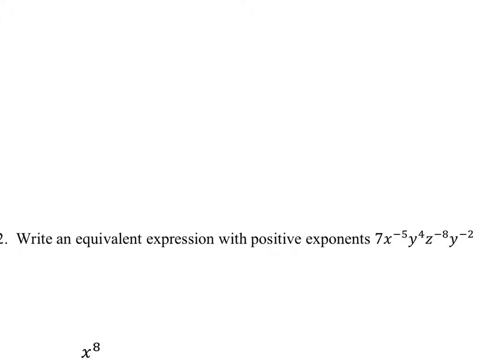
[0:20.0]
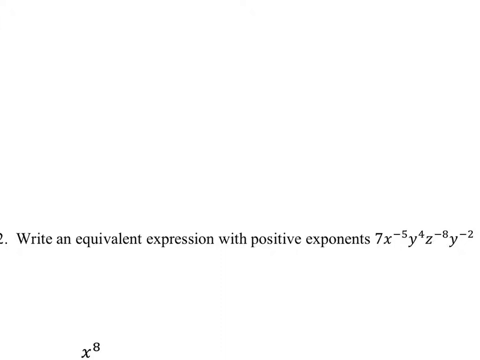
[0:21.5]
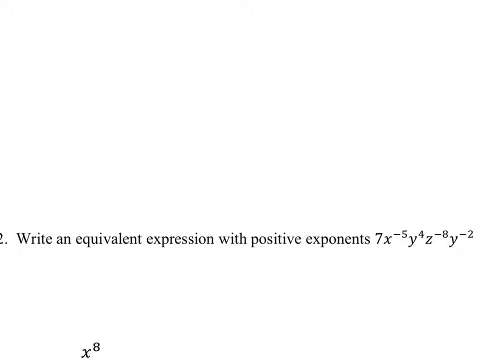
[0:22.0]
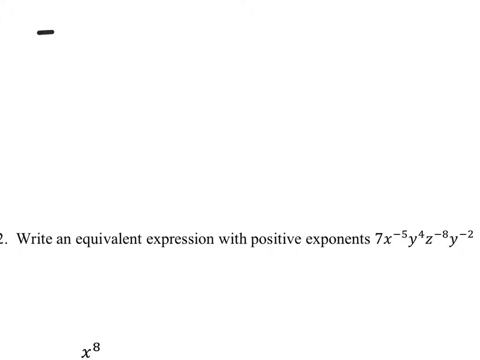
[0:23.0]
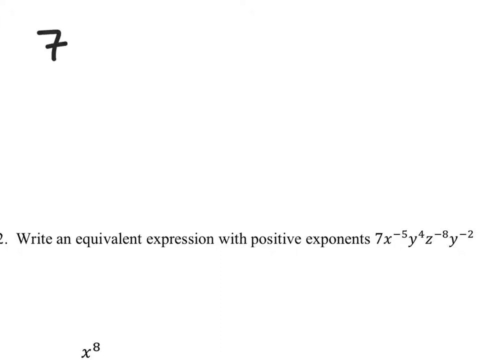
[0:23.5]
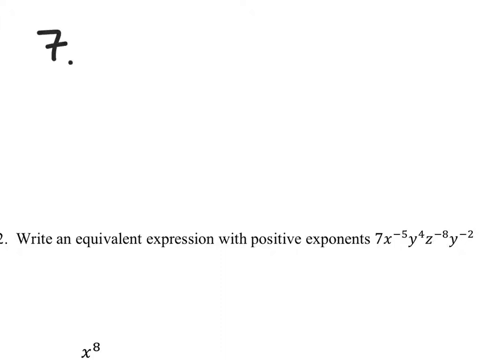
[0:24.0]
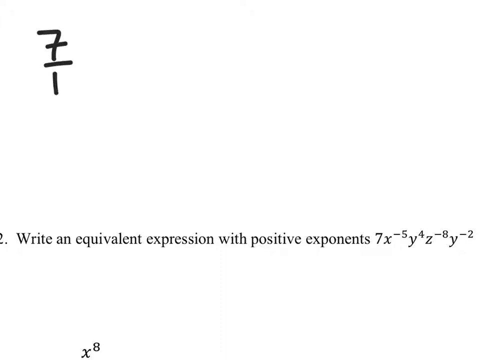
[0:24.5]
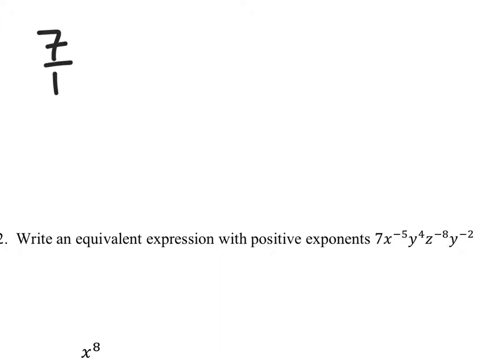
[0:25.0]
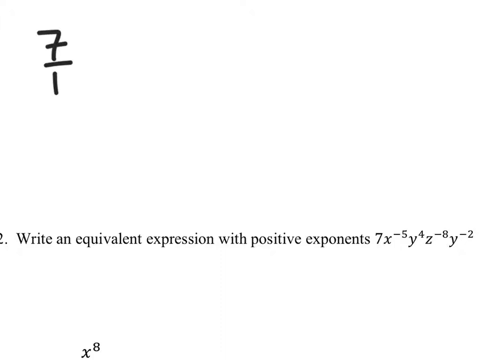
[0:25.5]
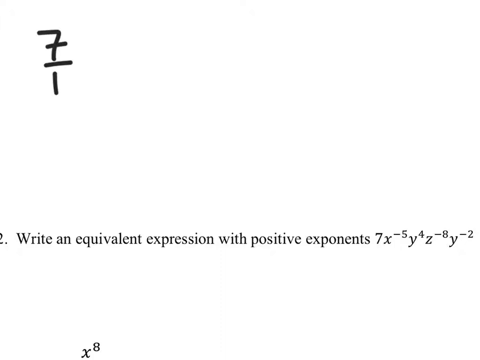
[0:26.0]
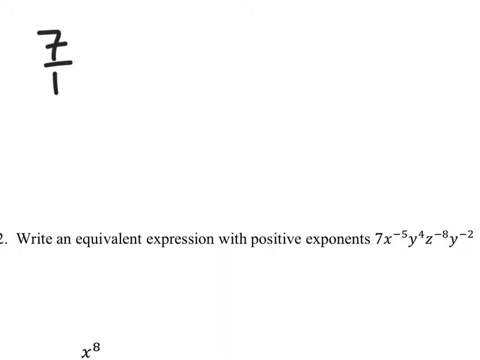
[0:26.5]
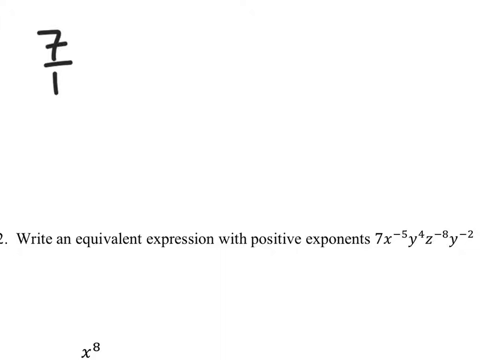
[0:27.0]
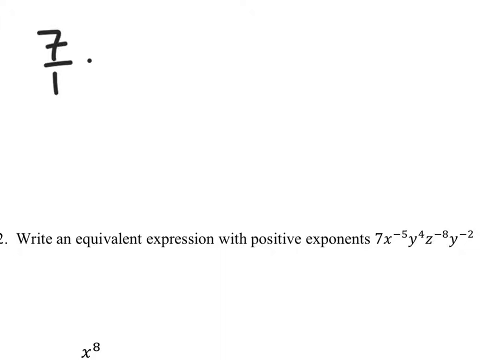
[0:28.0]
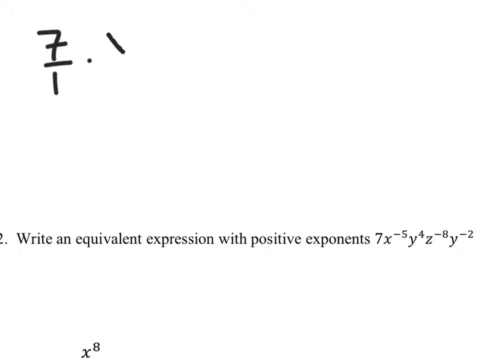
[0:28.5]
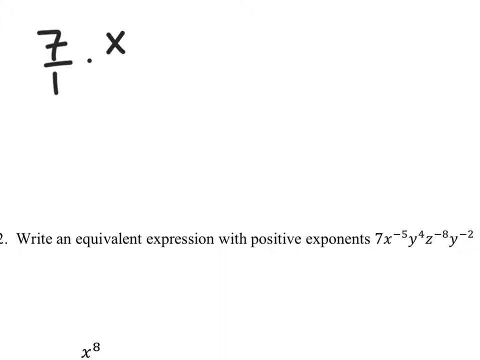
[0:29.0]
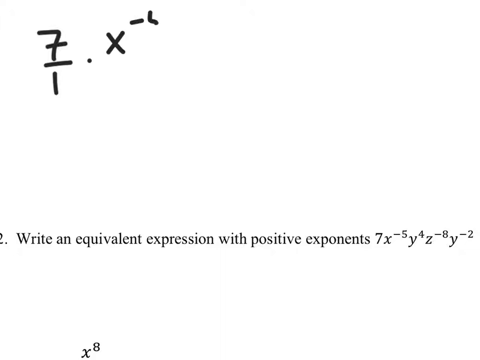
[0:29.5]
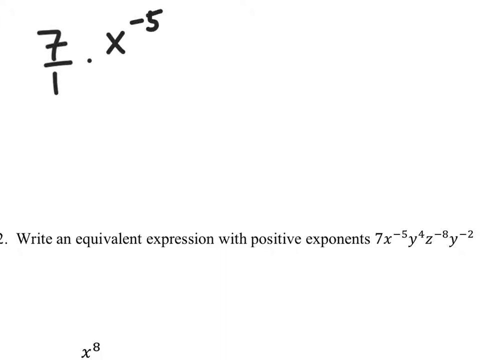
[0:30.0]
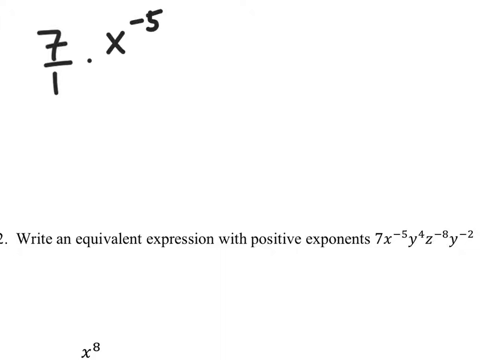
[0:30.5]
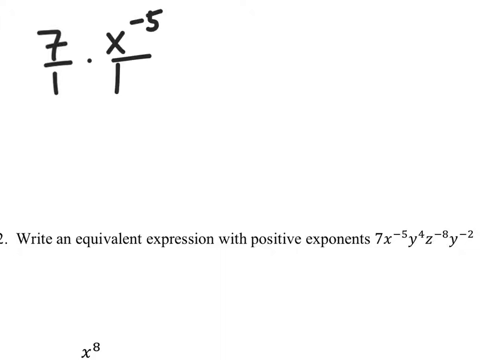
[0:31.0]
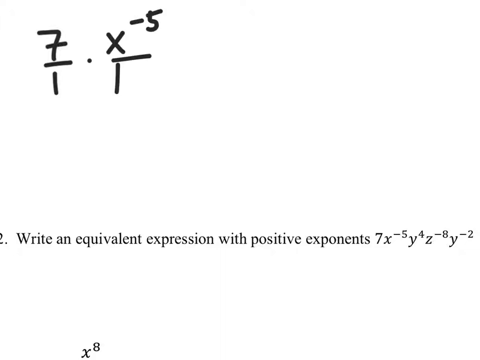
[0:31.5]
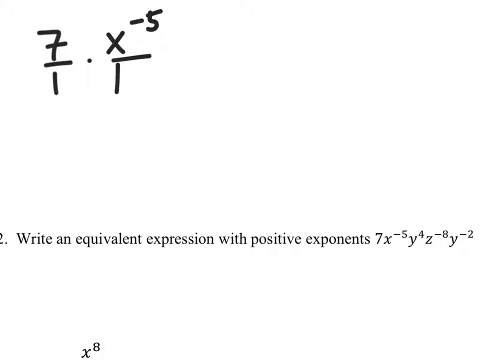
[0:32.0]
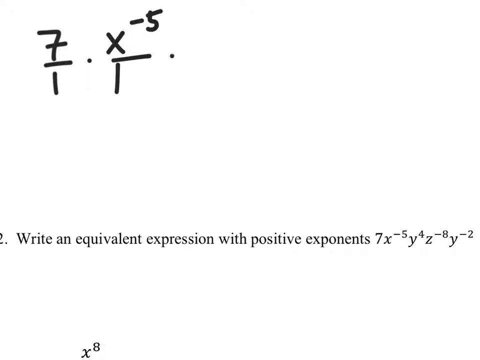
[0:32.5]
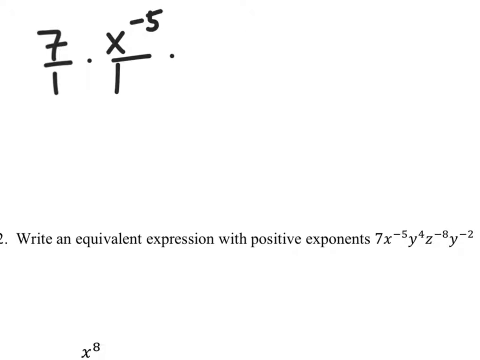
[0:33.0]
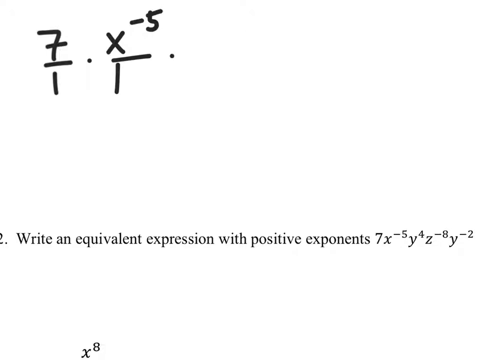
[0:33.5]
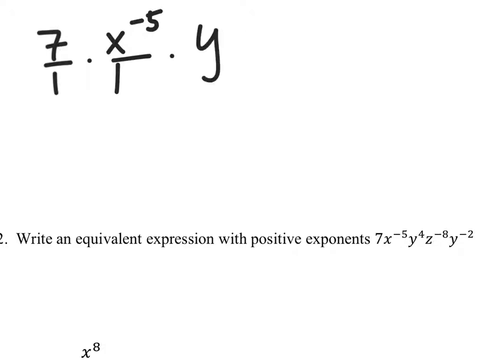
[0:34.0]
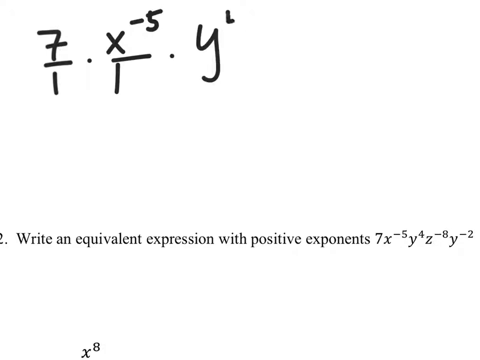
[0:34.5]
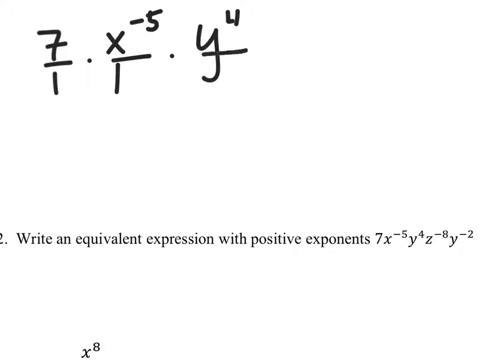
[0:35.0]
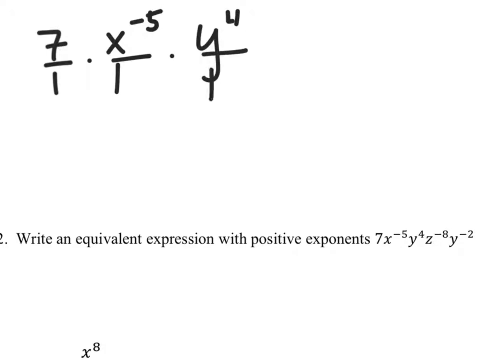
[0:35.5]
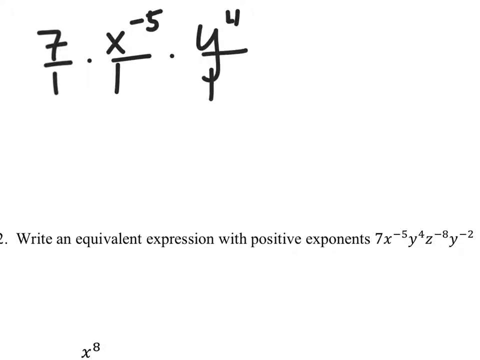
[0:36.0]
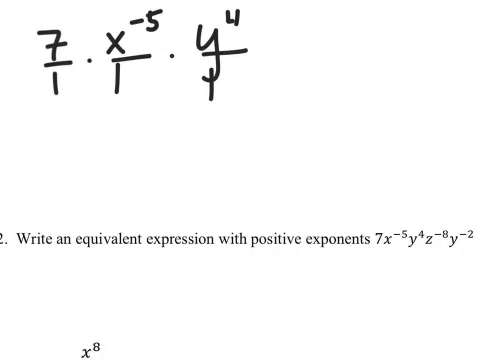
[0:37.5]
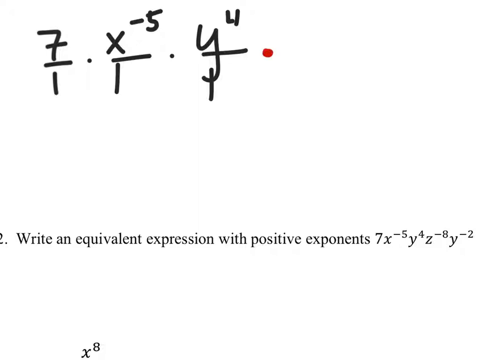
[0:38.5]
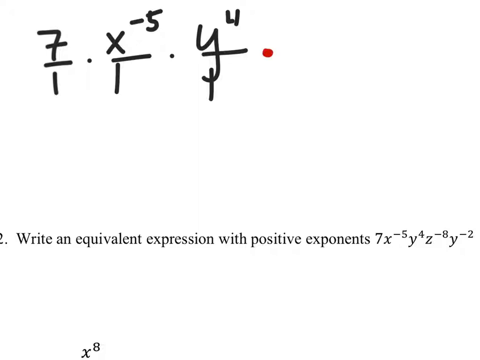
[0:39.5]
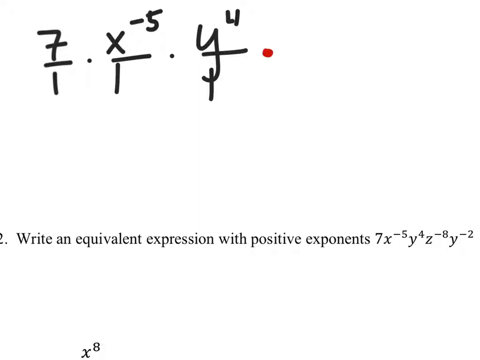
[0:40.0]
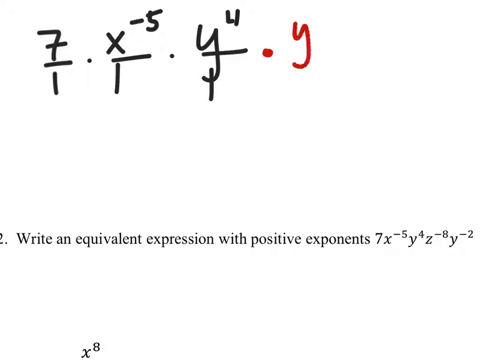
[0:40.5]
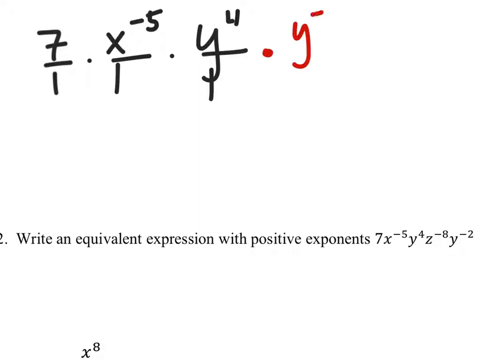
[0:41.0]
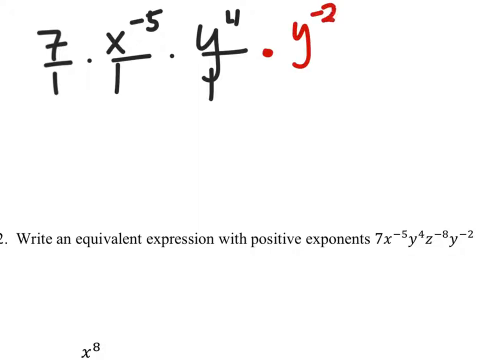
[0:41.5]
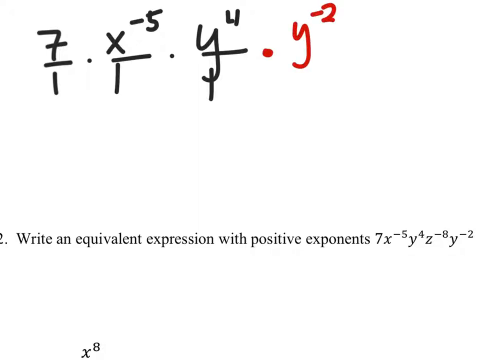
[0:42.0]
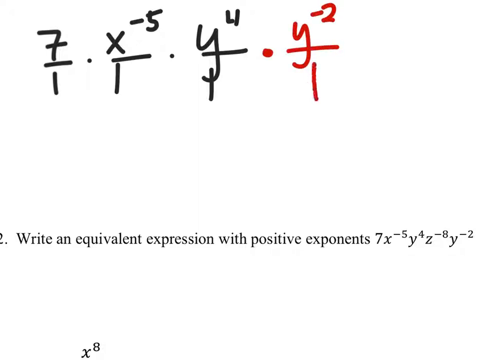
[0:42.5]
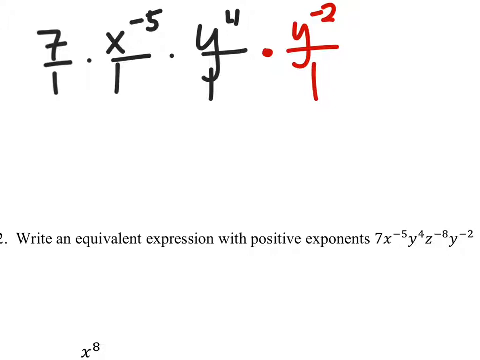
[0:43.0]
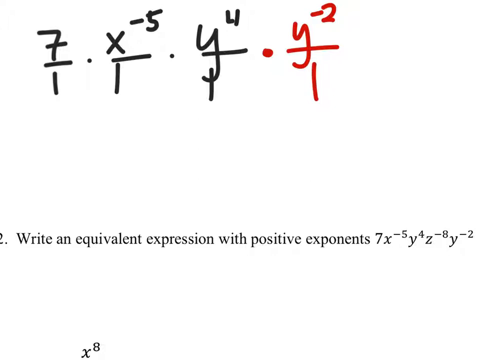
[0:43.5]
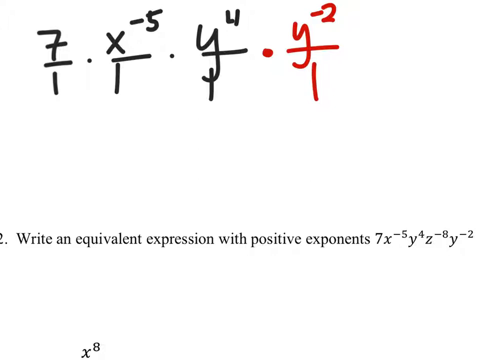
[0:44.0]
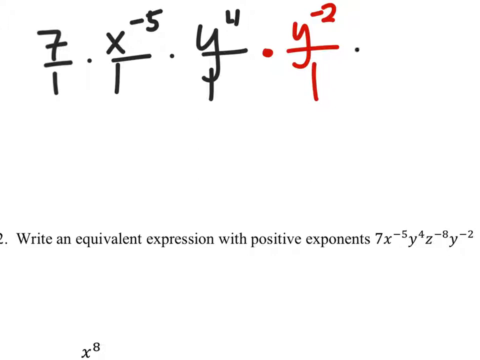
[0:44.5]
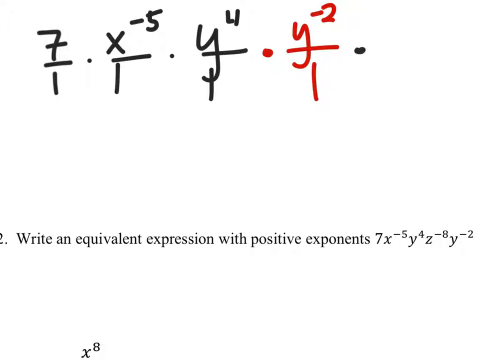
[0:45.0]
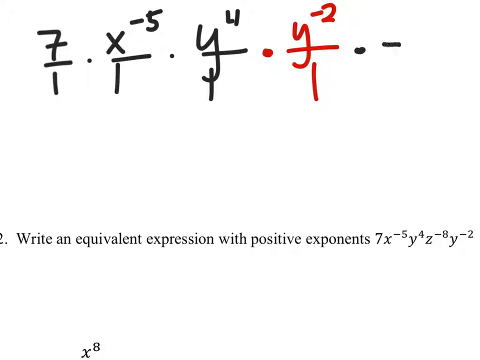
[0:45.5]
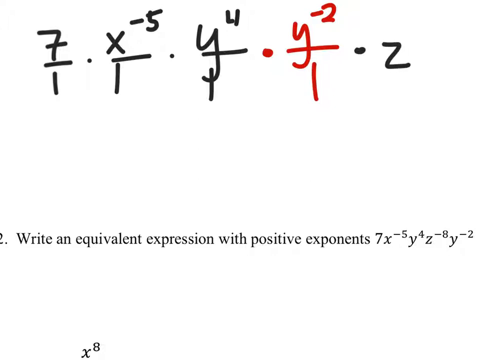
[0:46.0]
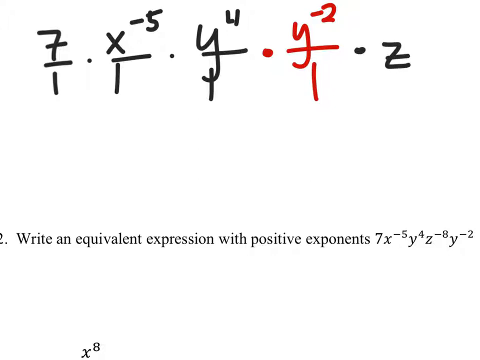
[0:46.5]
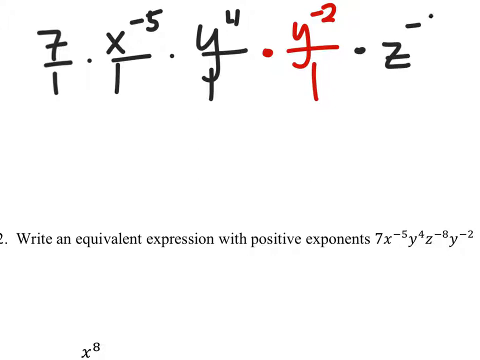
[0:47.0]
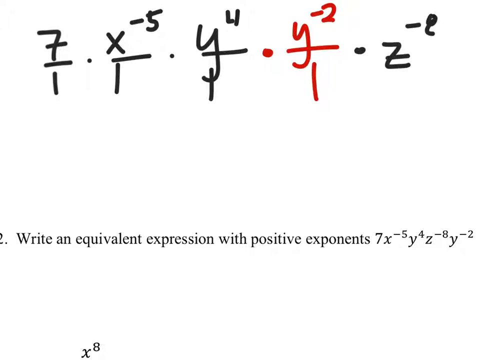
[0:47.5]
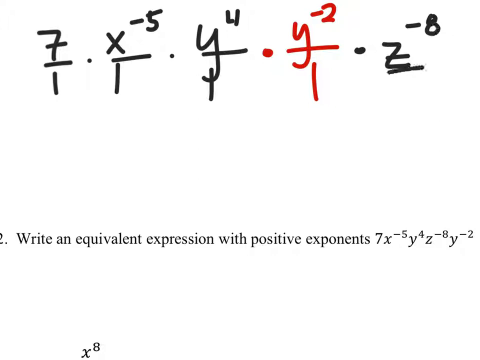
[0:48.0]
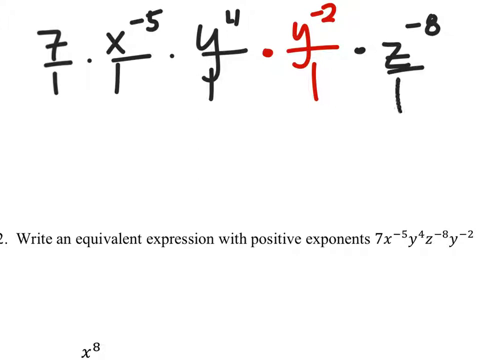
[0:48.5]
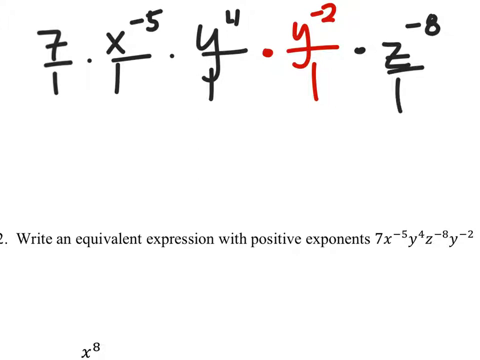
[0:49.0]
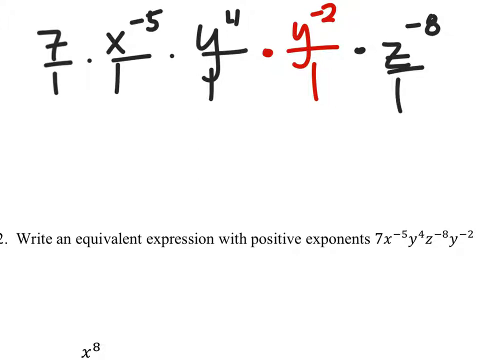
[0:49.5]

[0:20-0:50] The same white screen with the gradient to black in the bottom 20% is shown. Across the lower part, right above the gradient, is the numbered point 2, partially clipped off the board, with the black typed sentence "write an equivalent expression with positive exponents" and the expression 7x to the negative fifth, y to the fourth, z to the negative eighth, and y to the negative two. A handwritten 7 over 1 appears in the upper left of the screen as if being hand-drawn, though no hand is visible. Next to it appears x to the negative fifth over 1, with a small dot as a multiplication symbol between them. Another multiplication dot appears, then y to the fourth over 1, then a red multiplication dot and y to the negative two over 1, then a black multiplication dot and z to the negative eight over 1. The expression is reordered to put the y's together, presumably to combine them.